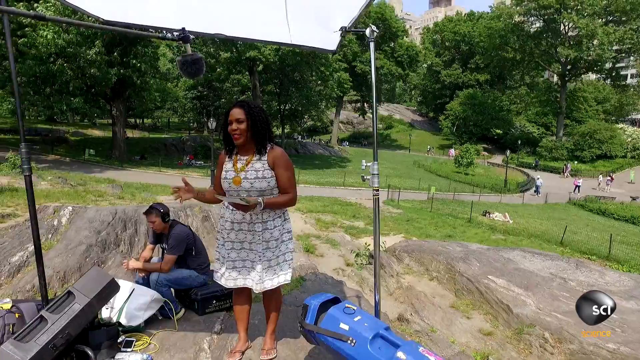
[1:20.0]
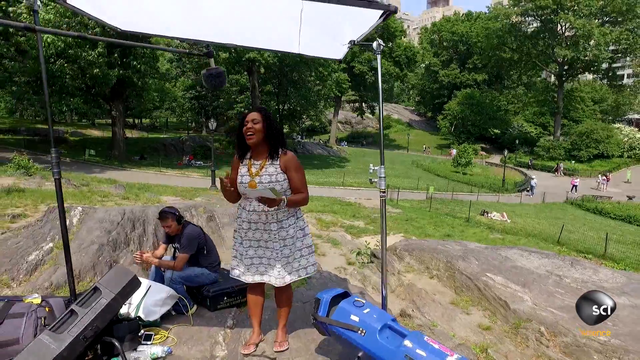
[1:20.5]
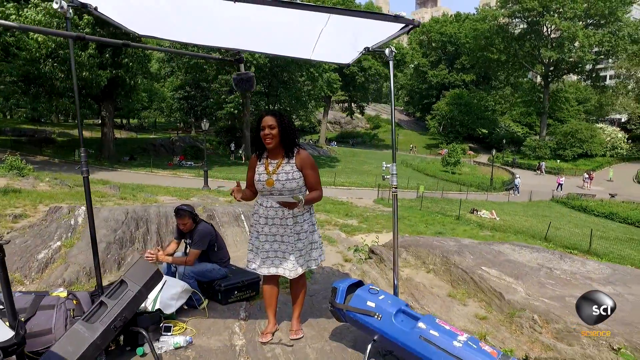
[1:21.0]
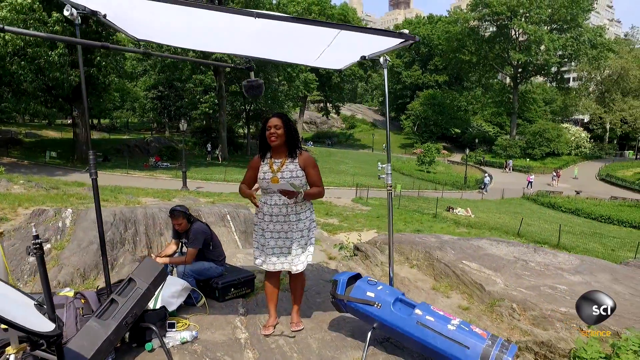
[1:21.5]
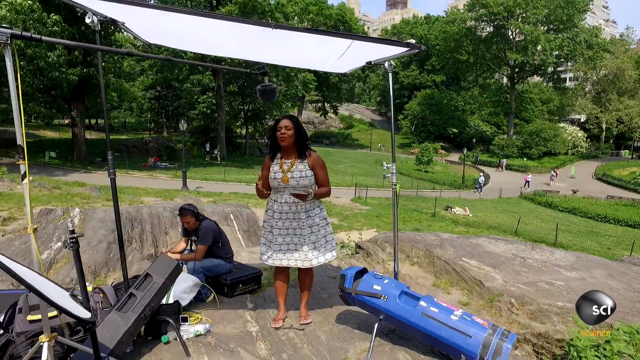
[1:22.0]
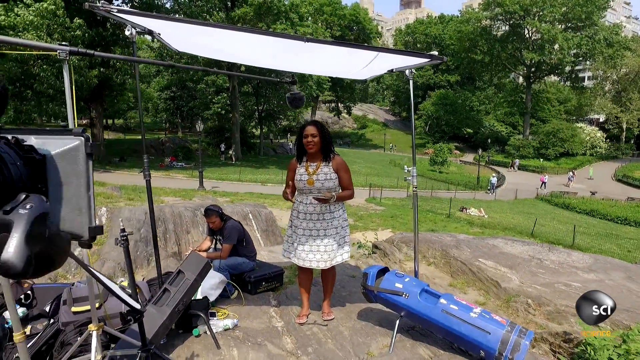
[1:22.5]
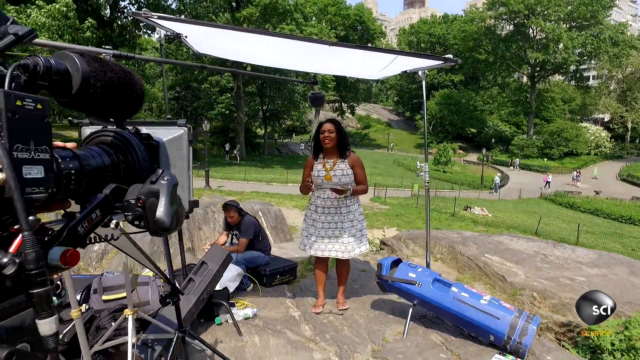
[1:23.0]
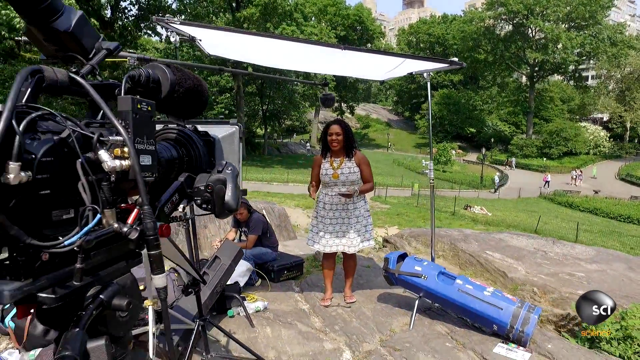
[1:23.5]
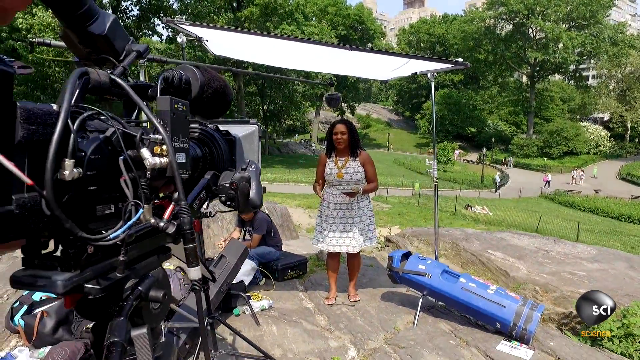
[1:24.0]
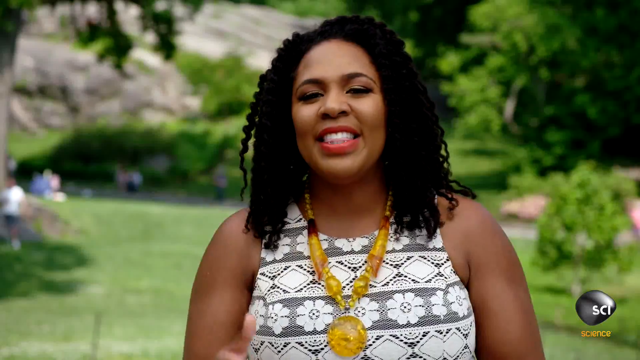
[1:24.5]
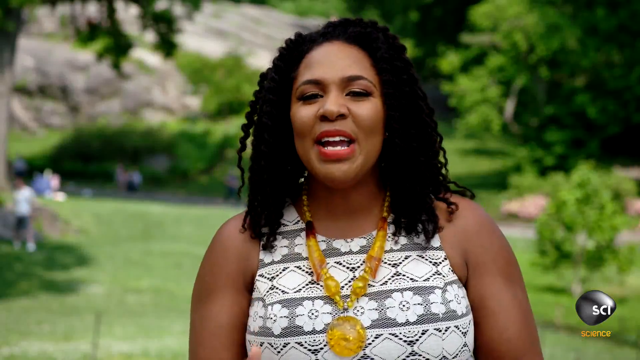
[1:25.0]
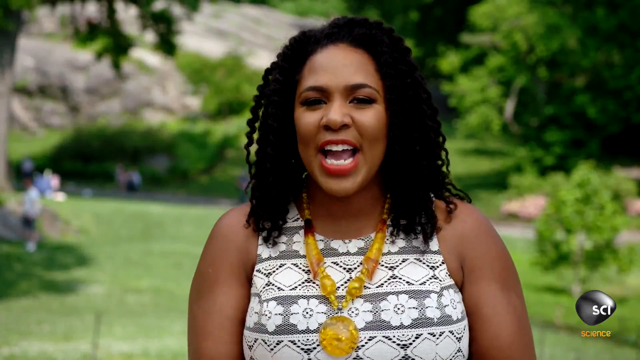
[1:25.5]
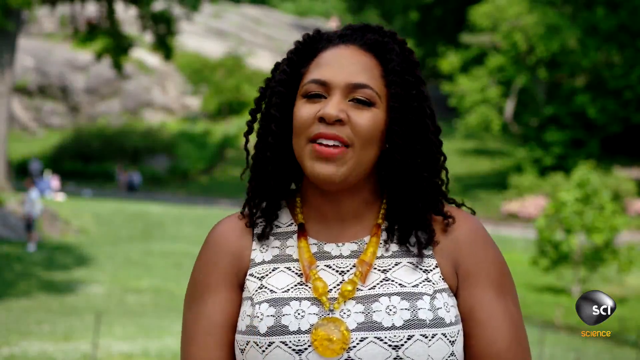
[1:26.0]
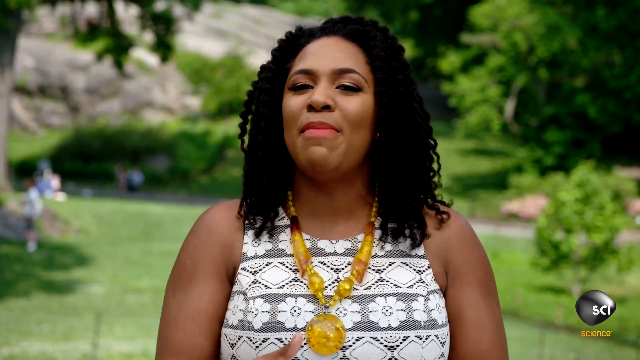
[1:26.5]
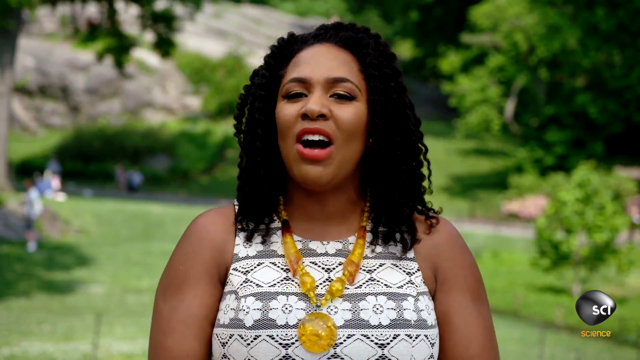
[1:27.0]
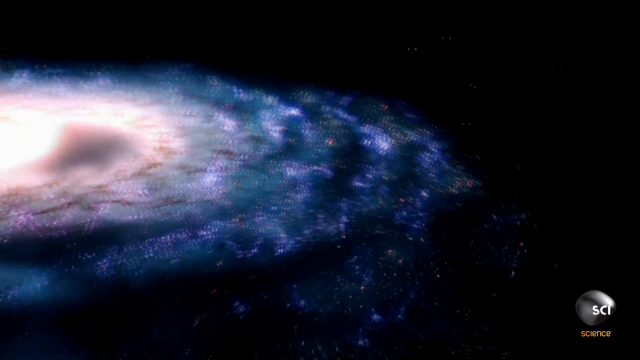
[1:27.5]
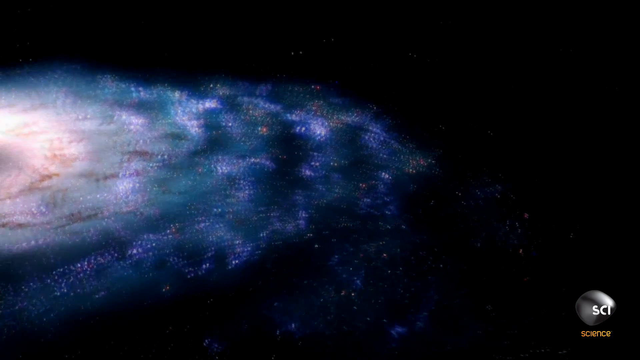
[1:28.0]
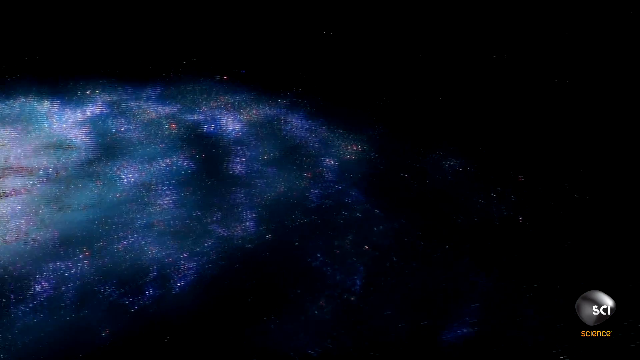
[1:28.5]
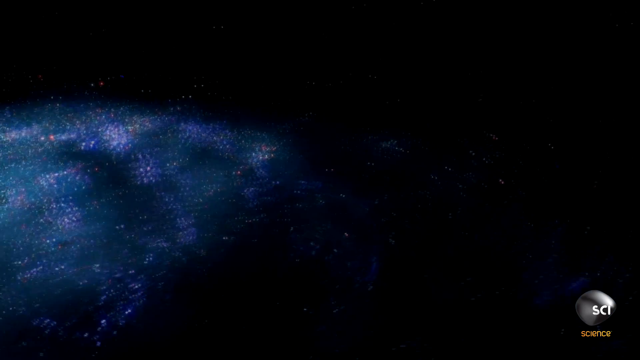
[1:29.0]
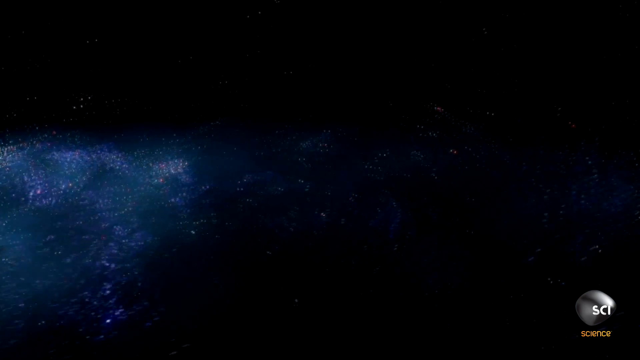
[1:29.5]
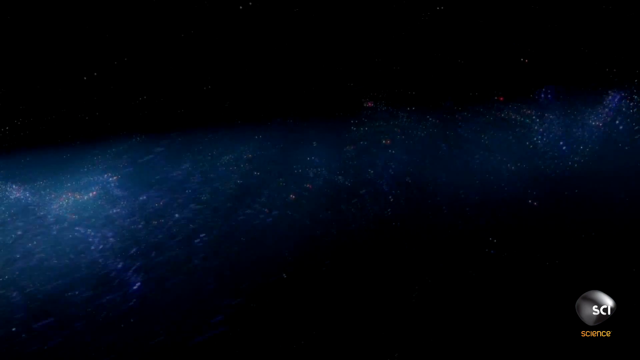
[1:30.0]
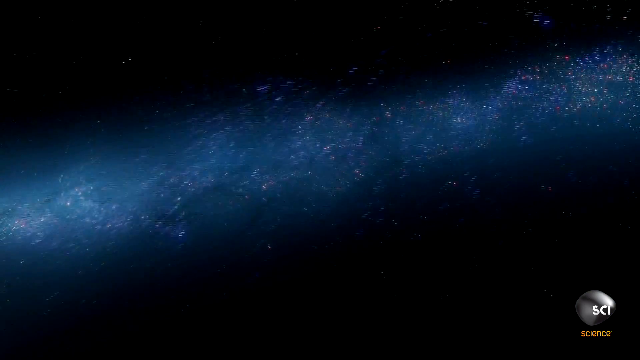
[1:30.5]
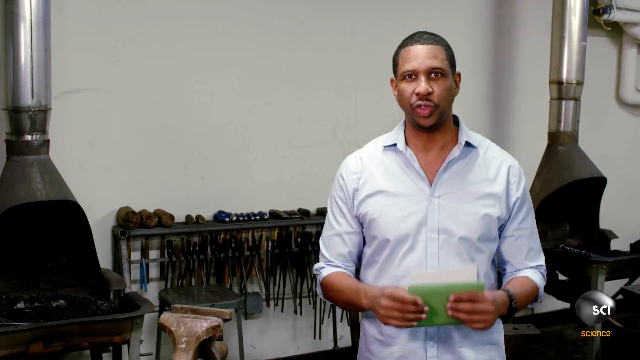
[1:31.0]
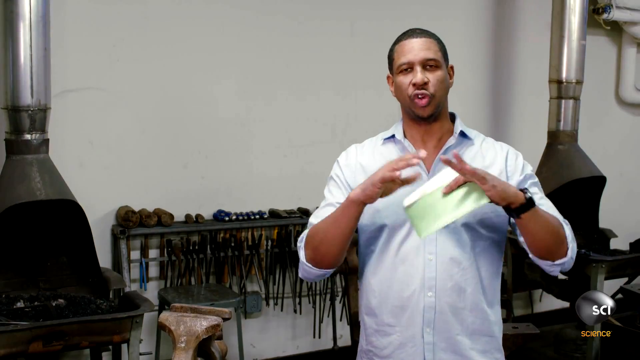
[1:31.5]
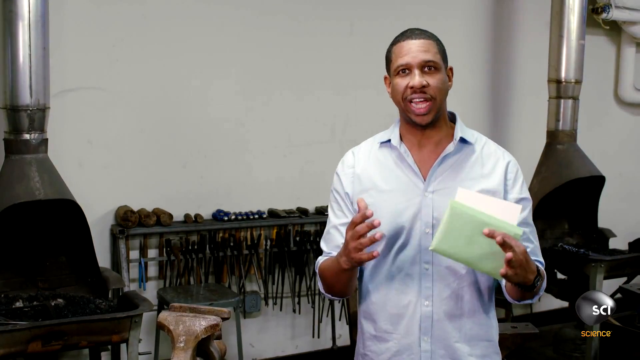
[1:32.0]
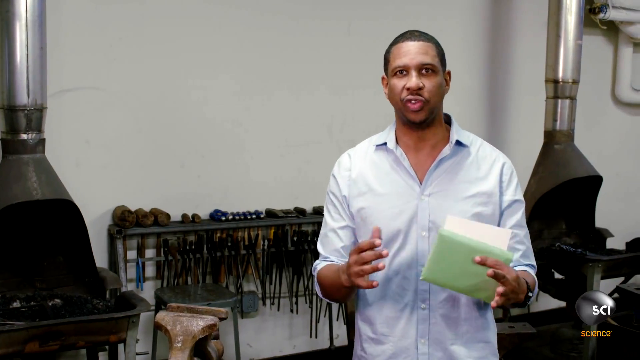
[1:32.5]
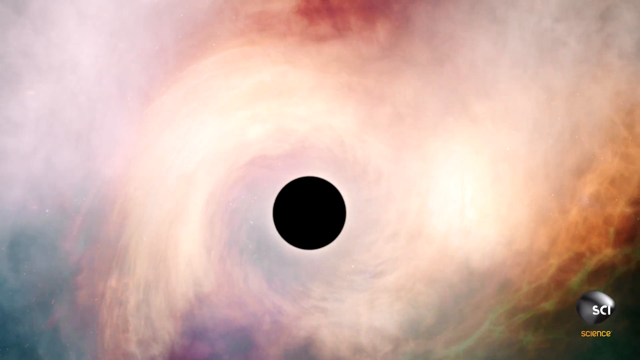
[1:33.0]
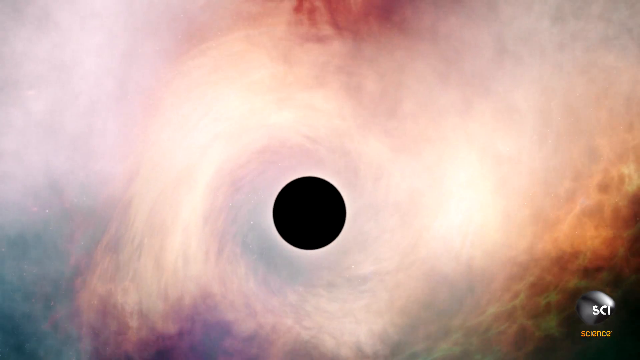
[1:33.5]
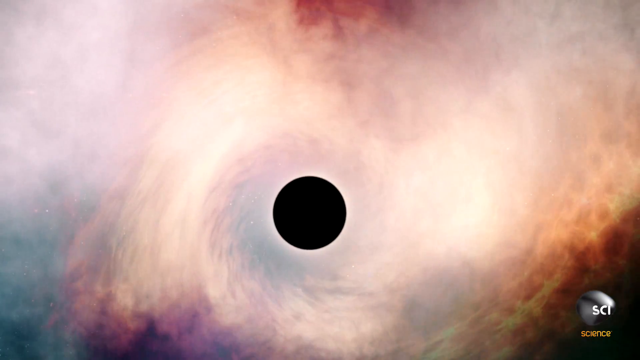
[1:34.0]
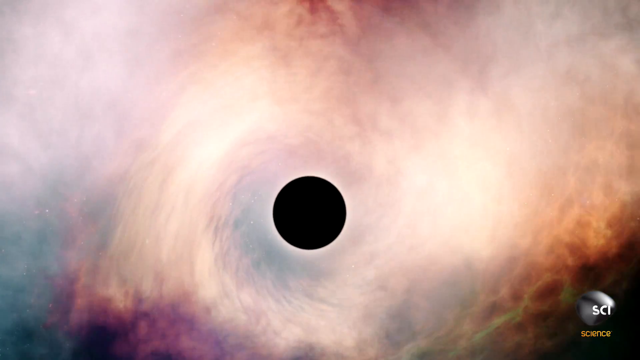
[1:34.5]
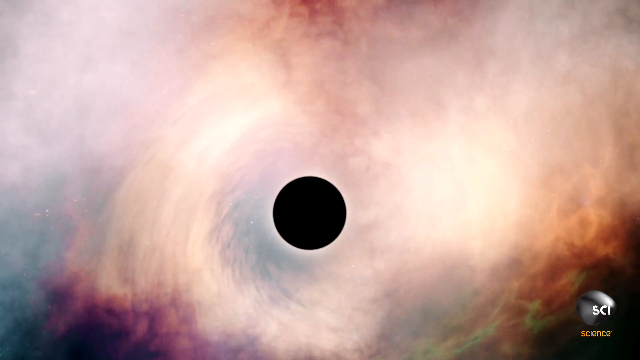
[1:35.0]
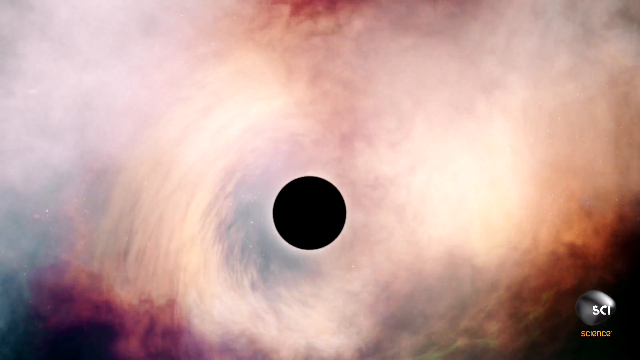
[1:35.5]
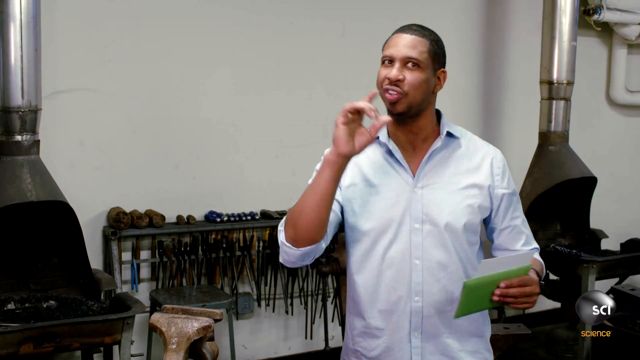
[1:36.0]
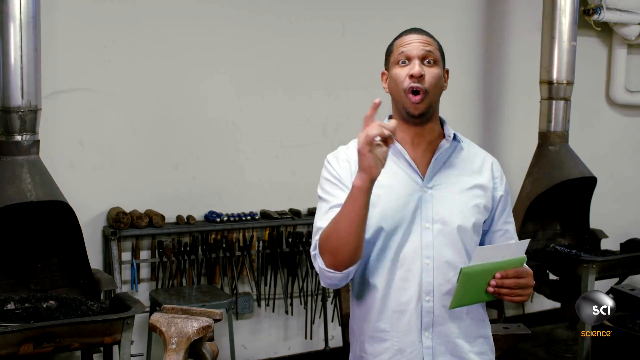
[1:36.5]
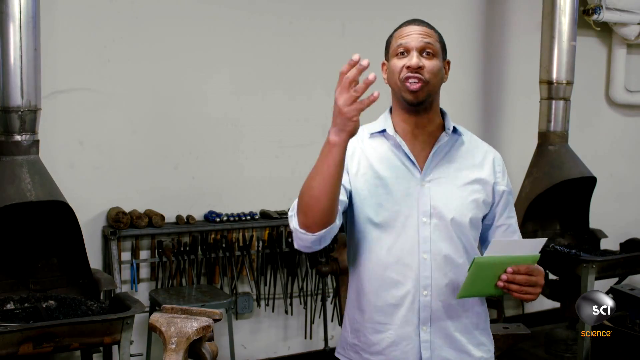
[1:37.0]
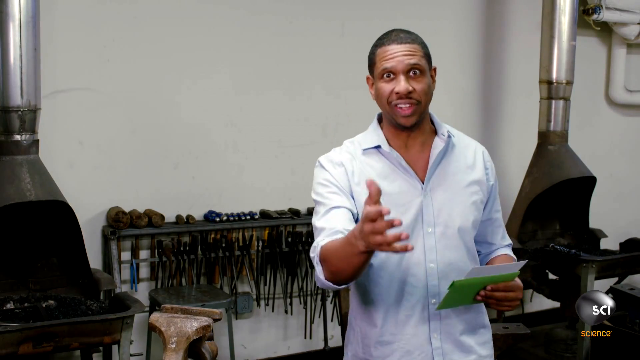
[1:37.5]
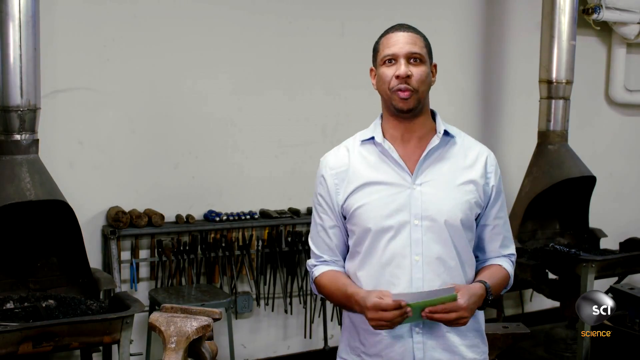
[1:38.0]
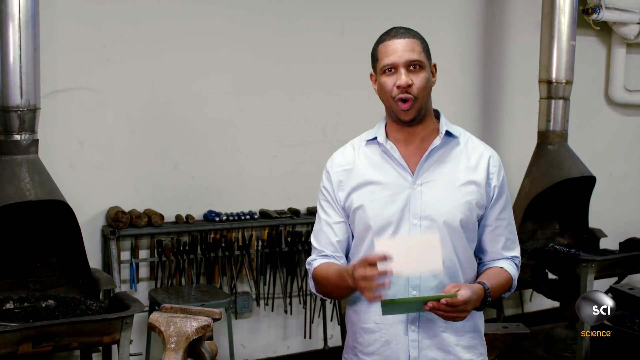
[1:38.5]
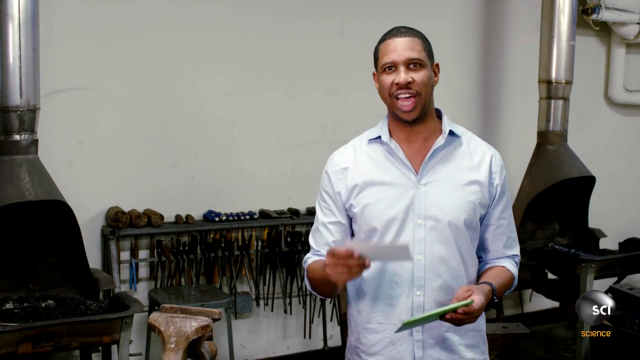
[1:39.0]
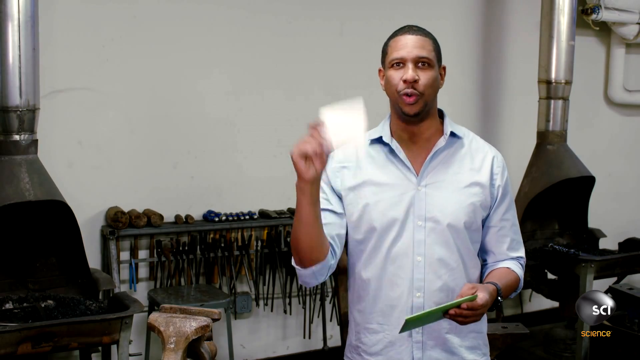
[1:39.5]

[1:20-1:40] Two celestial bodies collide, surrounded by pink, blue, grey and brown cosmic forces and dust. The video switches to the woman in the white dress, facing slightly left, smiling and speaking while another person sits on a crate or chest to her left. That person wears a blue shirt and blue jeans, has their hands in front of them and looks down. The camera pans out and to the left as the woman continues speaking excitedly, revealing a black camera. The angle then shifts closer, directly in front of the woman, who raises her hand, brings it down, raises it again and makes an arcing motion toward the right as she speaks excitedly. A 3D representation of a galaxy follows; the view rotates and zooms to focus on the galaxy's edge. The man in the white shirt holds his hands up as he speaks toward the viewer. Another black hole depiction is shown, and then the man in the white shirt points forward with his right hand before throwing the white paper behind his right shoulder while holding on to the green envelope in his left hand.